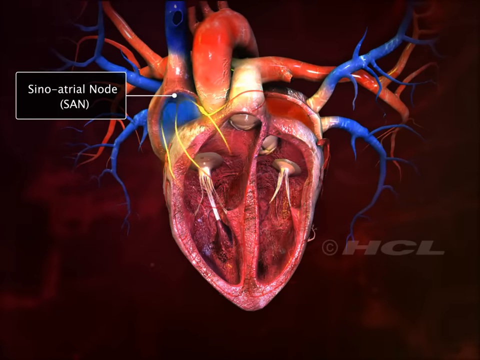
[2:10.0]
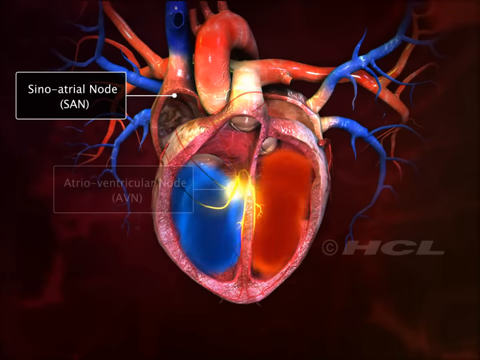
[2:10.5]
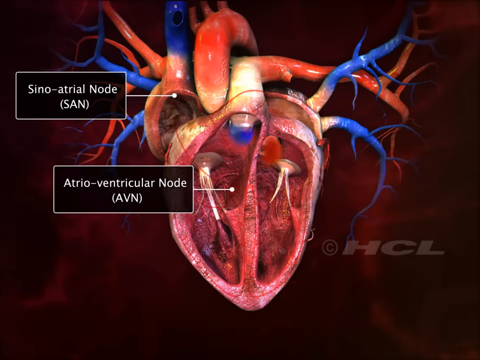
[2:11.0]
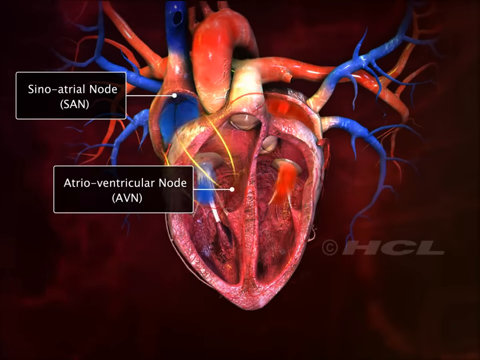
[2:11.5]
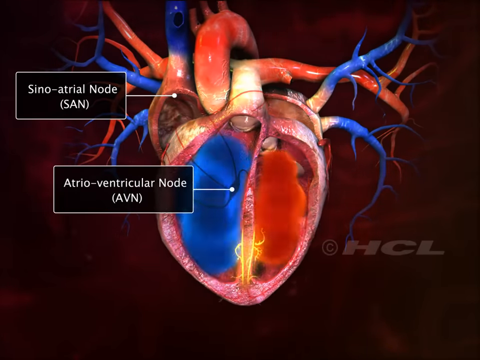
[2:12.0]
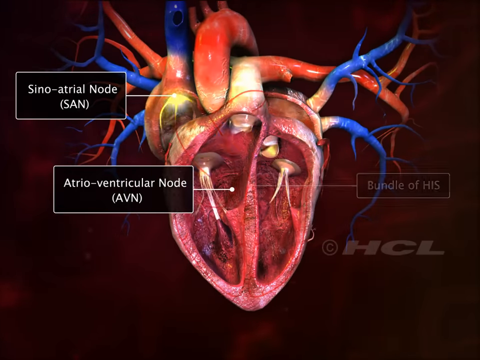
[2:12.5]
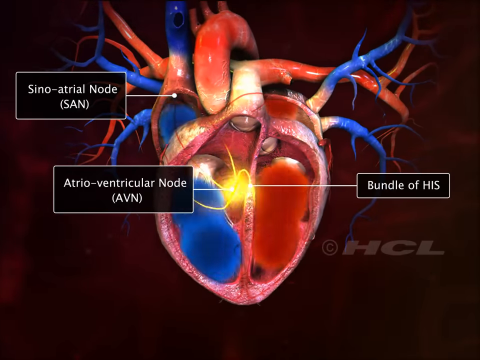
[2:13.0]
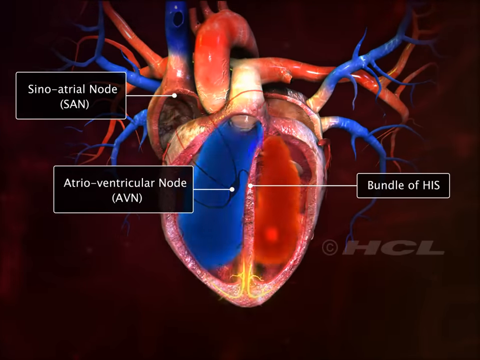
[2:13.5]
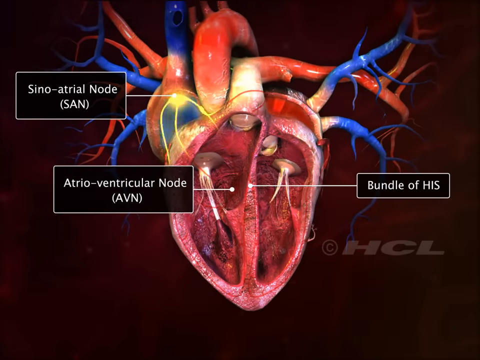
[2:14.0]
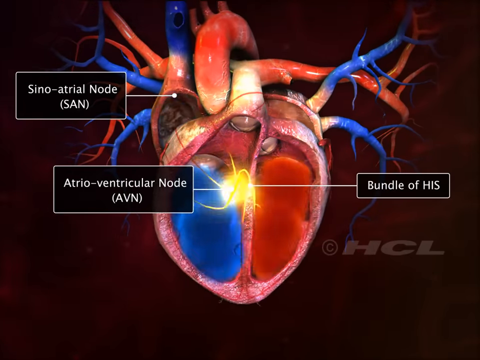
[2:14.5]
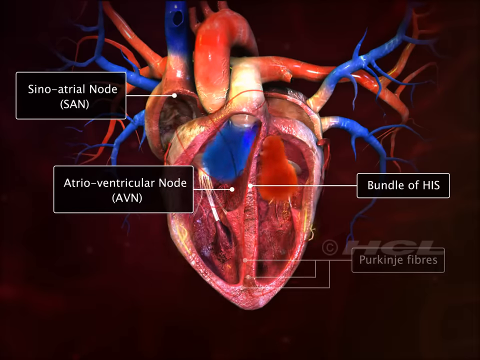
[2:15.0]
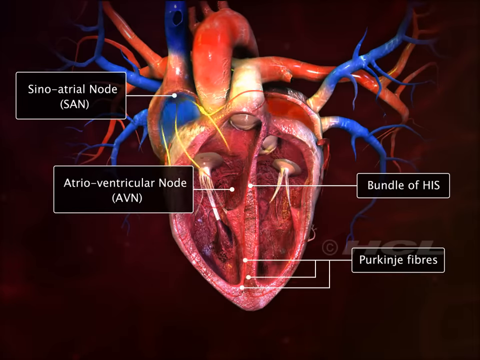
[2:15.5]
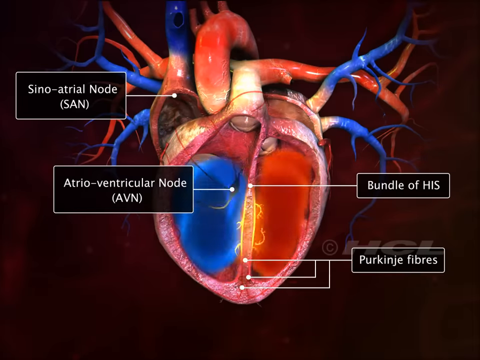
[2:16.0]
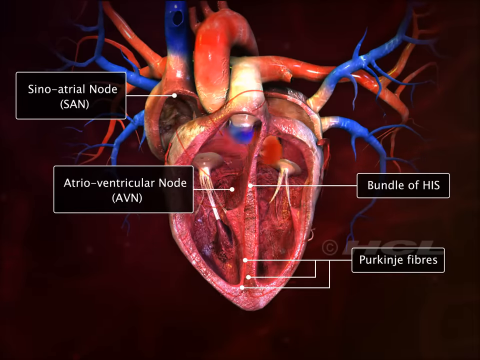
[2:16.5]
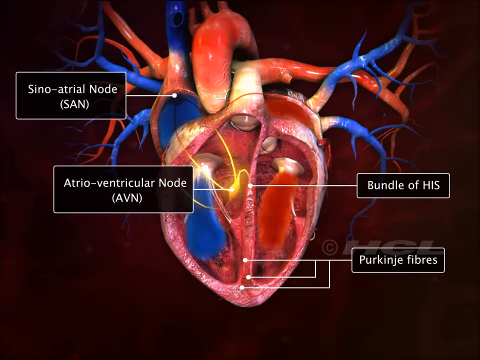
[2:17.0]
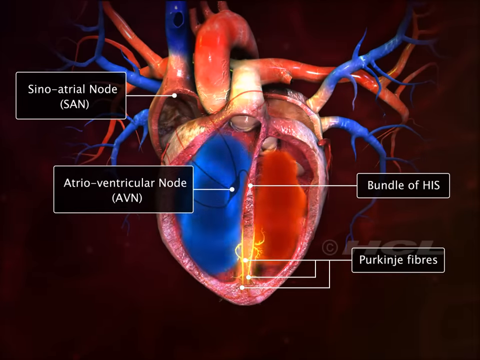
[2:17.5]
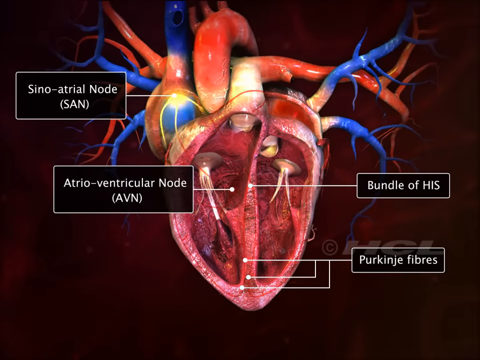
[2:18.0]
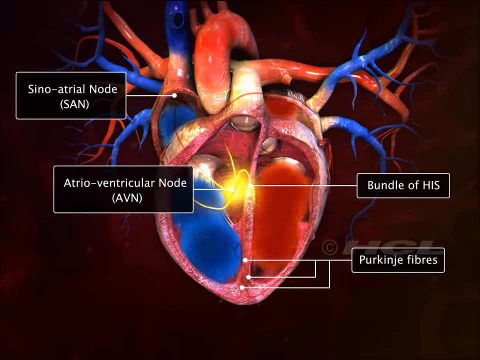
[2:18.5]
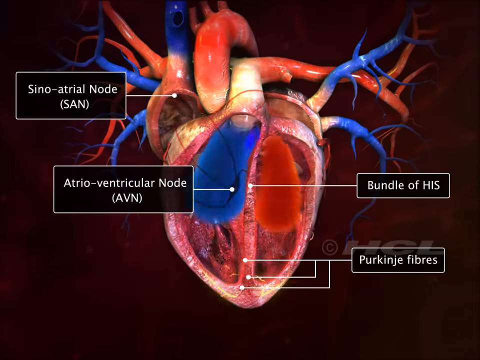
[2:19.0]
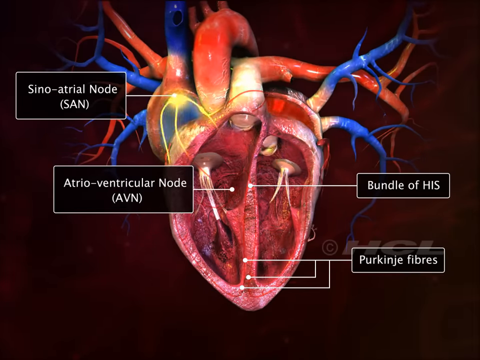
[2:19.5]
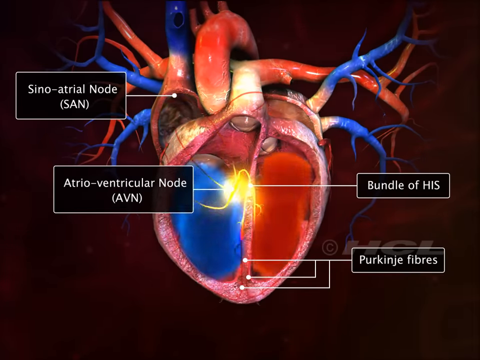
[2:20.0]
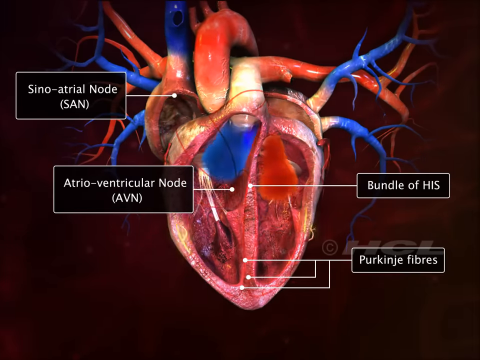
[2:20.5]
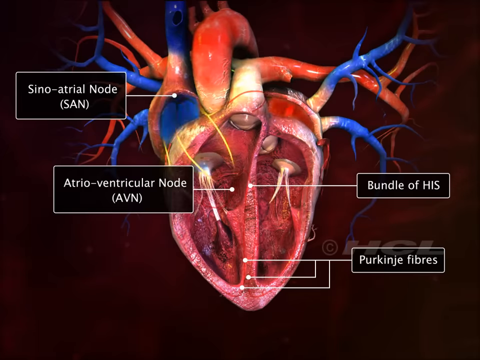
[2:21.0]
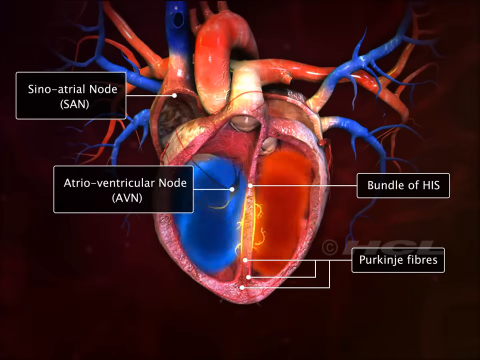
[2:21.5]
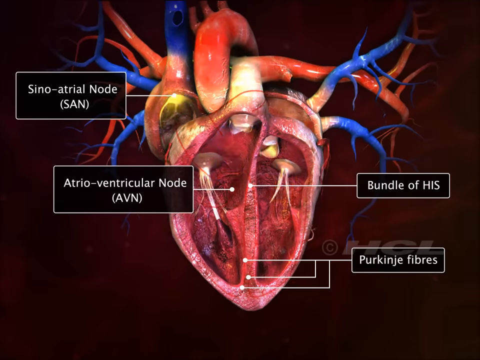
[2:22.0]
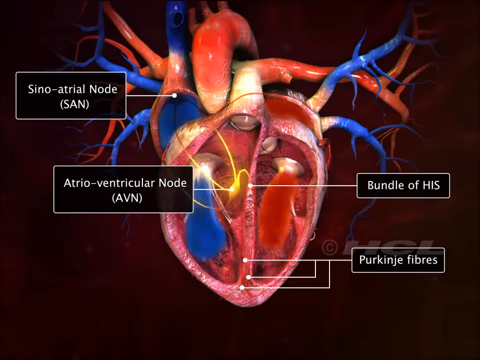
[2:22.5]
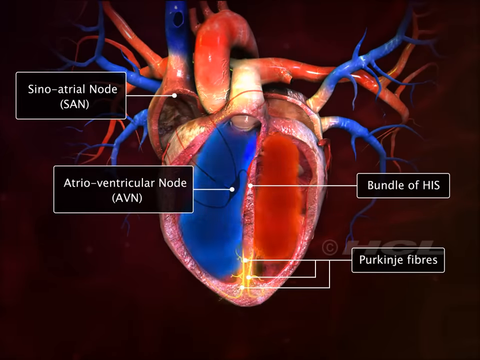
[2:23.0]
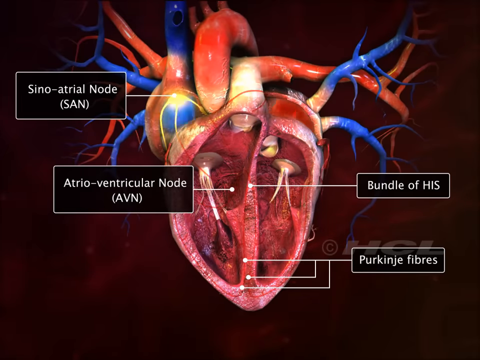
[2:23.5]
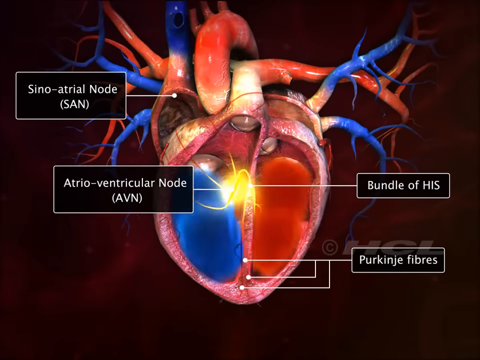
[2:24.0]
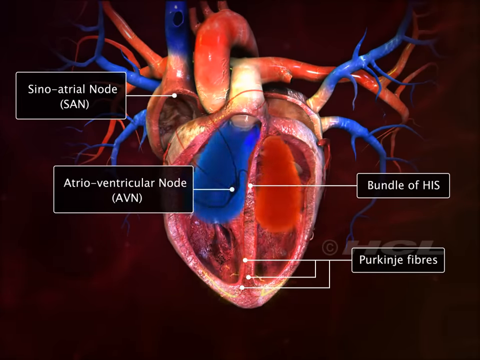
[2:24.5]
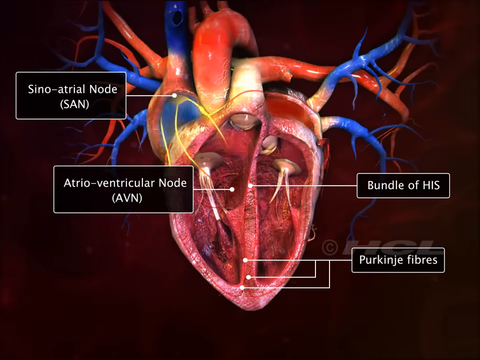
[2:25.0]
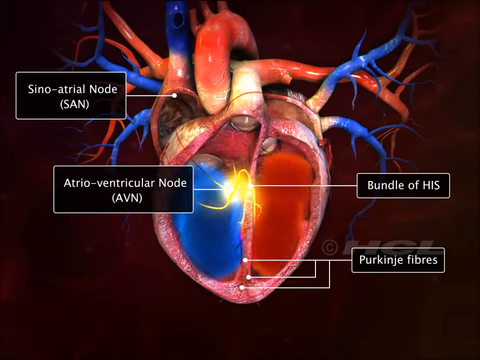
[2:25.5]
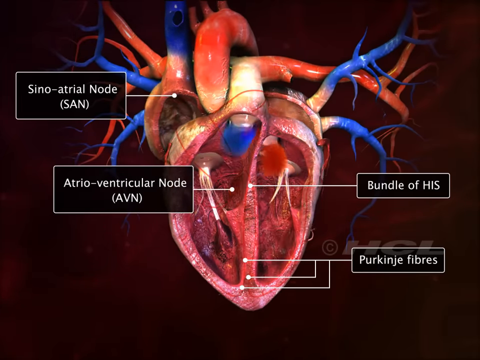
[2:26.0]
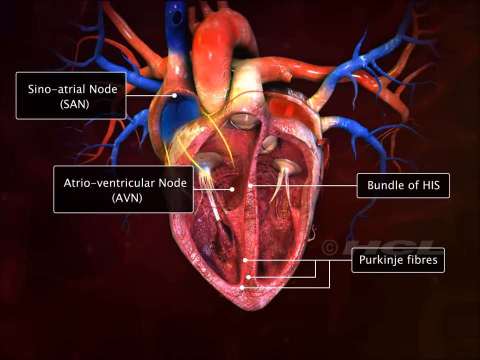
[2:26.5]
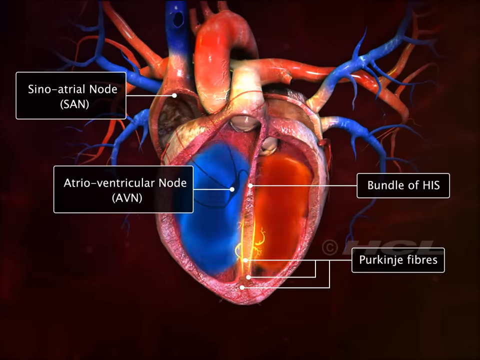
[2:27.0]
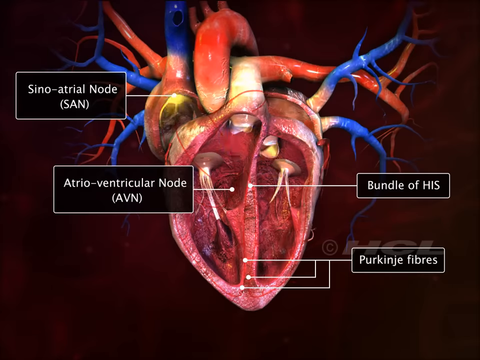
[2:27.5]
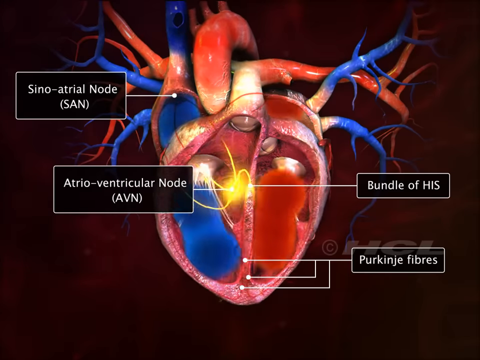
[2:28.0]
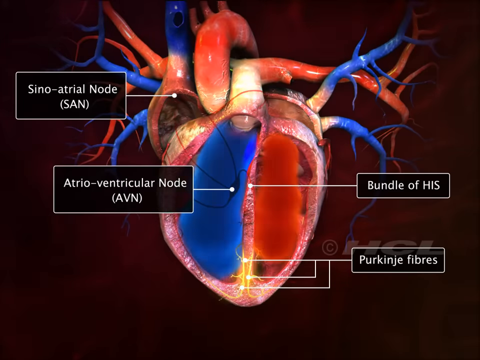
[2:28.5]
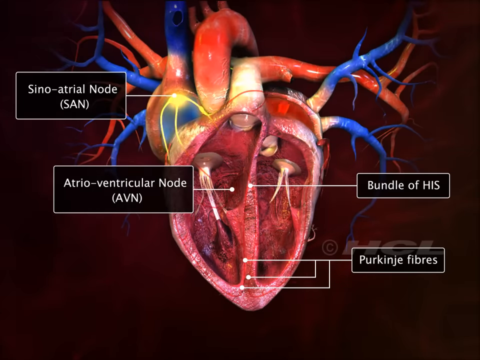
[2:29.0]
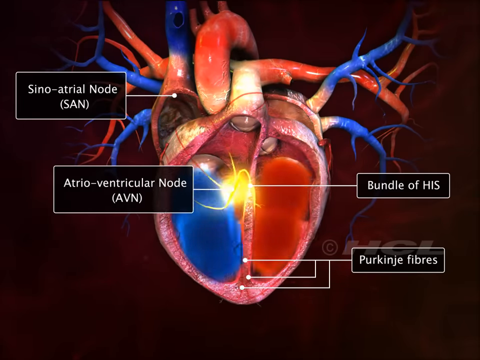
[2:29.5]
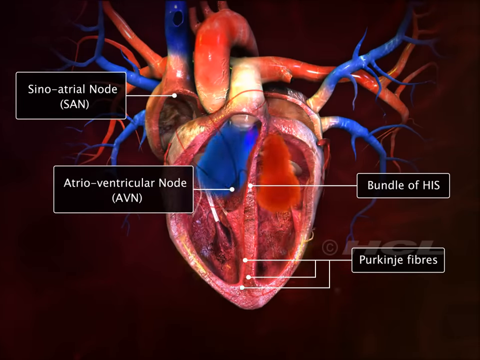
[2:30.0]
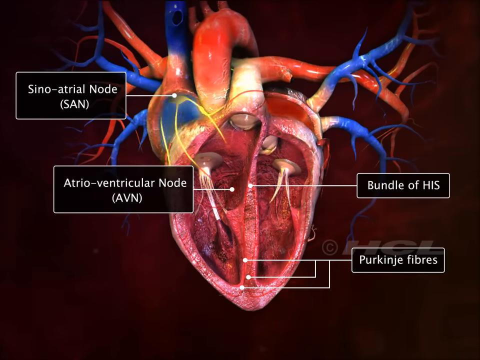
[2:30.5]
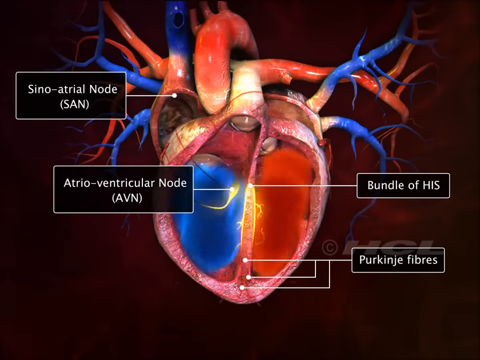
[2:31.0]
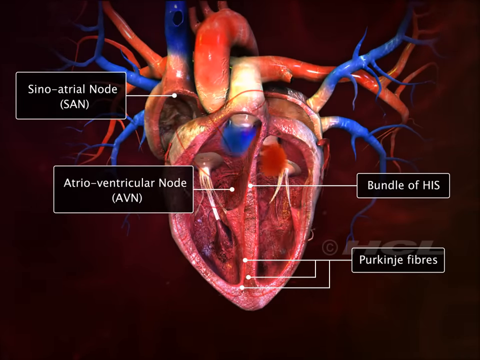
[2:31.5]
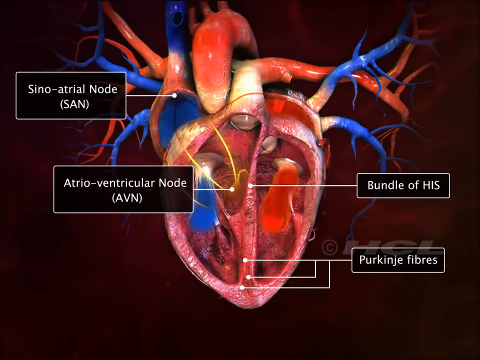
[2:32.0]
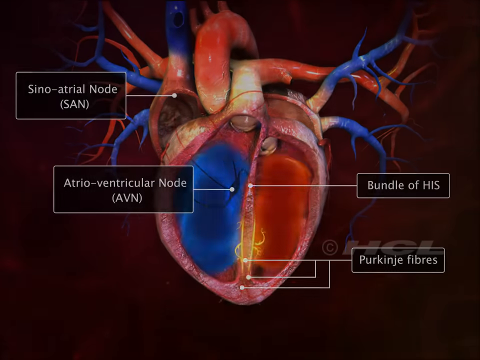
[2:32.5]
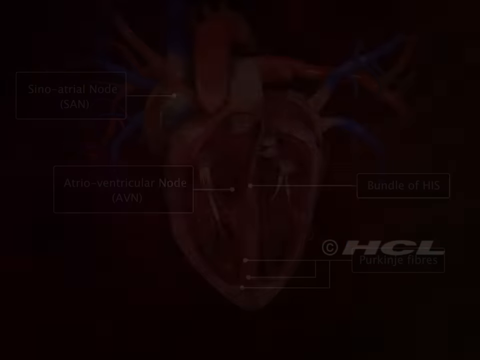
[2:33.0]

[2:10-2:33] A 3D image of a human heart, cut open to show the inside, has a diagram-like bullet point marking the seno-atrial node, also known as the SAN, in the upper left corner. An electrical current travels from the seno-atrial node over to the atrial-ventricle node near the bottom, which seems to be responsible for pumping the blood to the main part of the heart; the blood is then sucked into the valves, repeating over and over. Another arrow marks the bundle of HIS, and three arrows at the bottom mark the Purkinje fibers at the bottom of the heart. The heart keeps beating as these parts are shown. The graphic shows three veins or pathways with a yellow light traveling through them and all through the heart, going down from the seno-atrial node into the vein parts and the fibers, then shooting right back up and repeating.